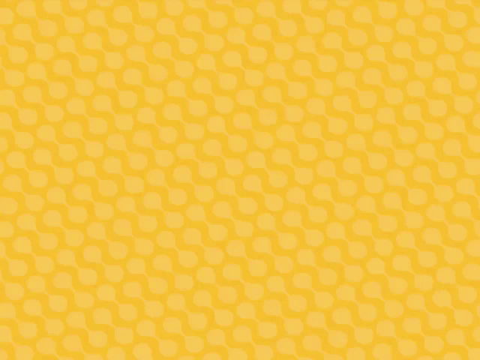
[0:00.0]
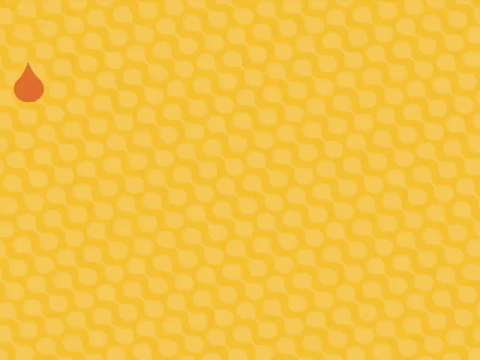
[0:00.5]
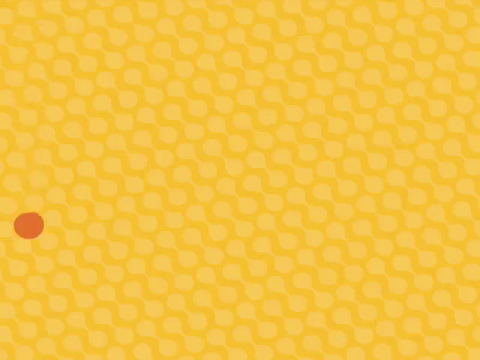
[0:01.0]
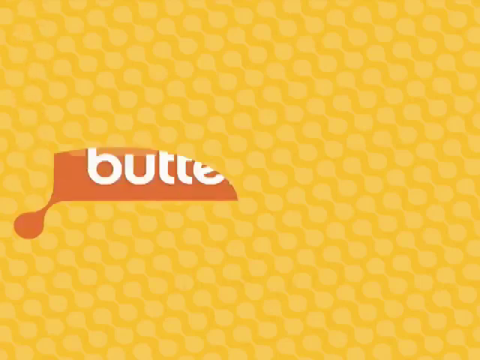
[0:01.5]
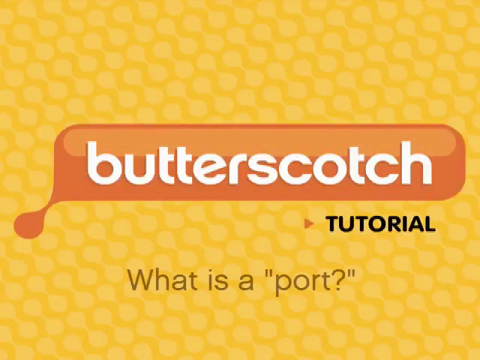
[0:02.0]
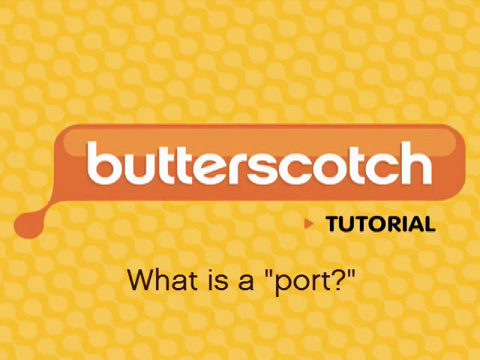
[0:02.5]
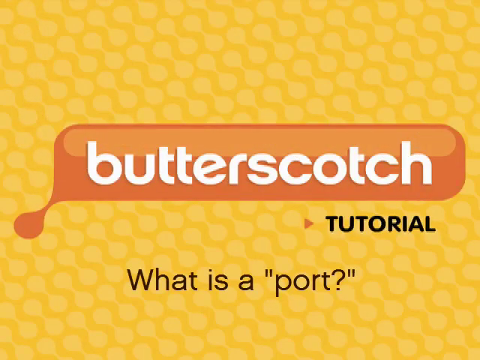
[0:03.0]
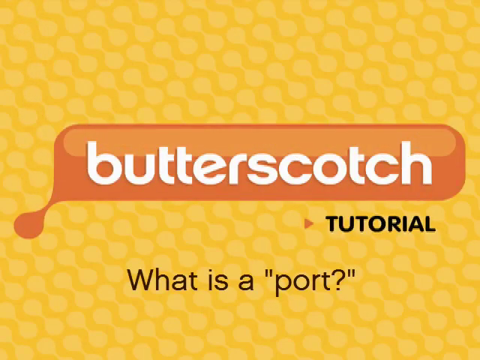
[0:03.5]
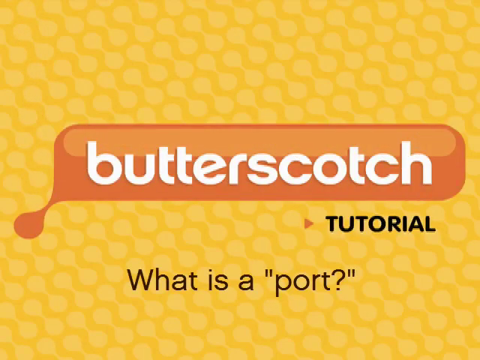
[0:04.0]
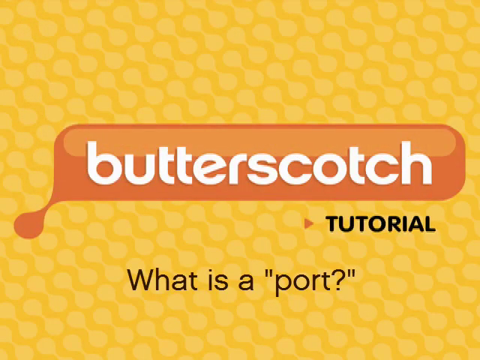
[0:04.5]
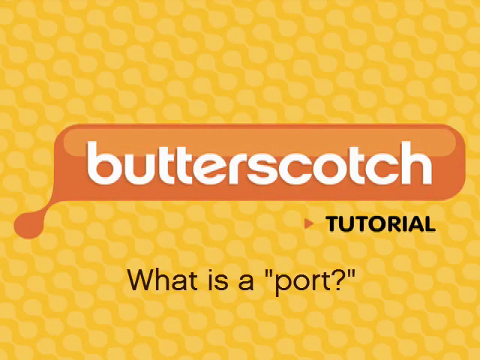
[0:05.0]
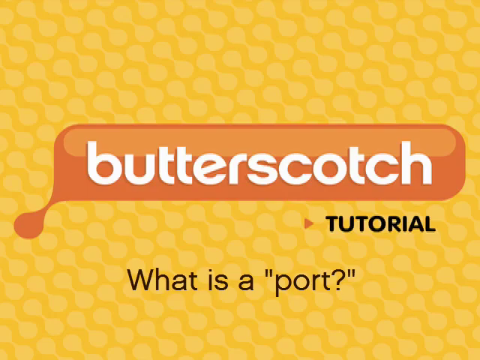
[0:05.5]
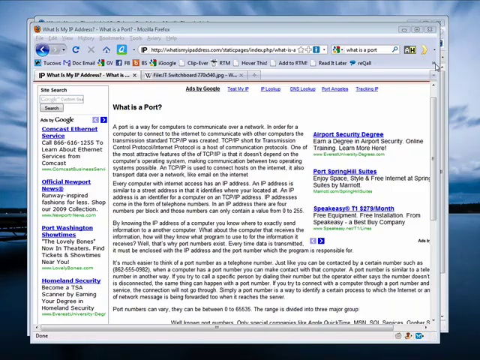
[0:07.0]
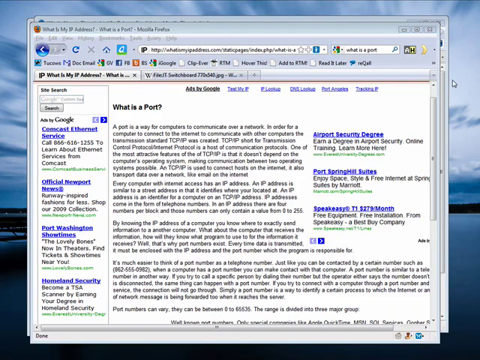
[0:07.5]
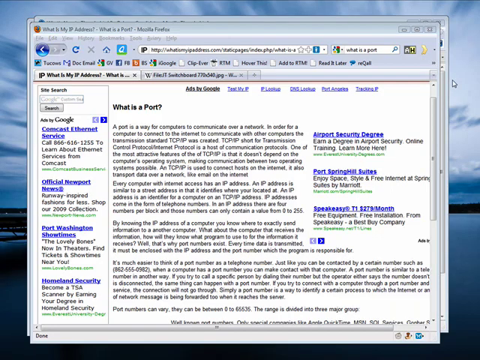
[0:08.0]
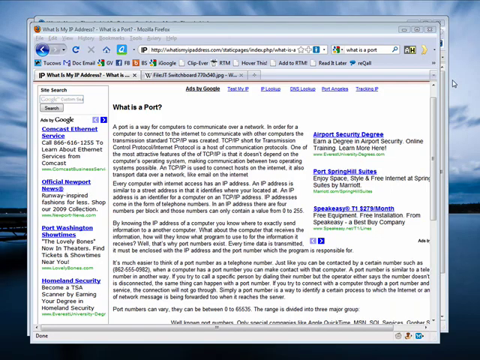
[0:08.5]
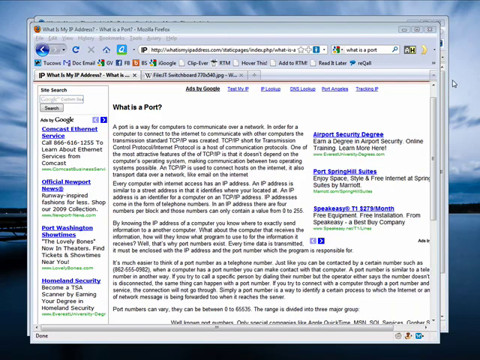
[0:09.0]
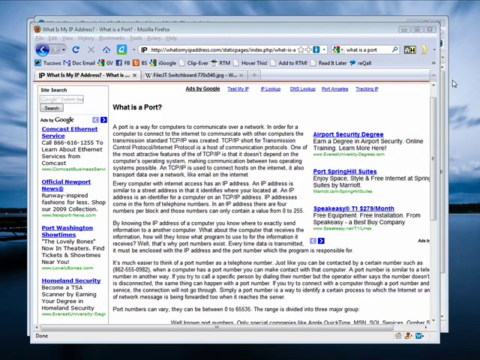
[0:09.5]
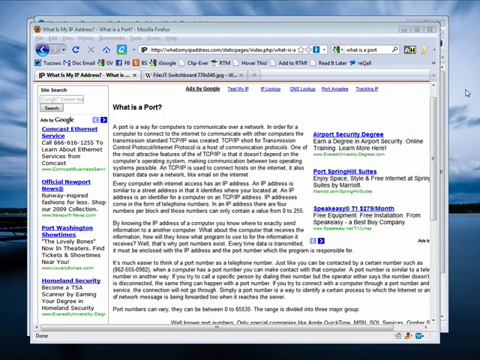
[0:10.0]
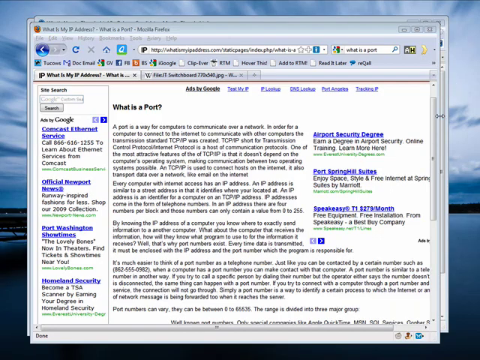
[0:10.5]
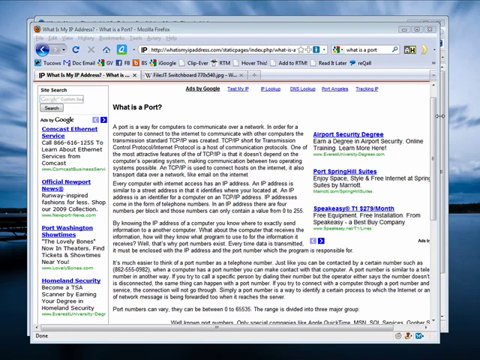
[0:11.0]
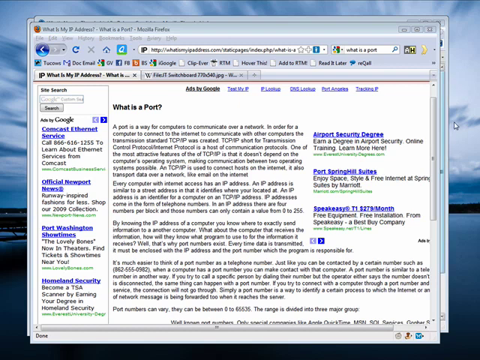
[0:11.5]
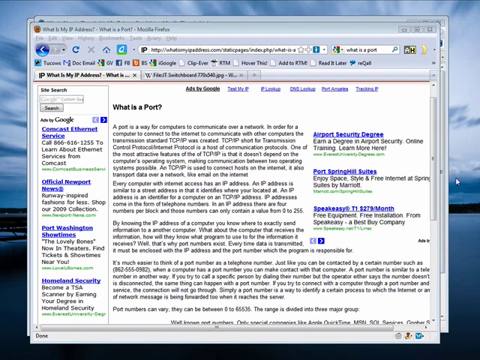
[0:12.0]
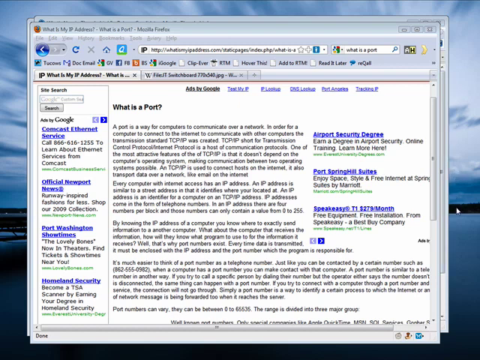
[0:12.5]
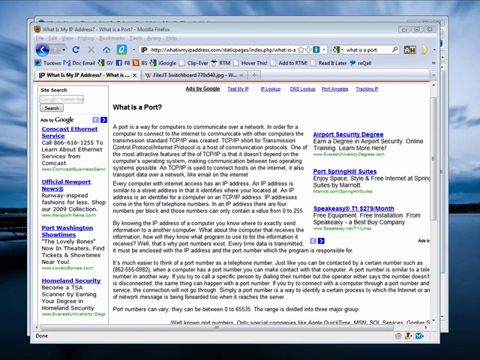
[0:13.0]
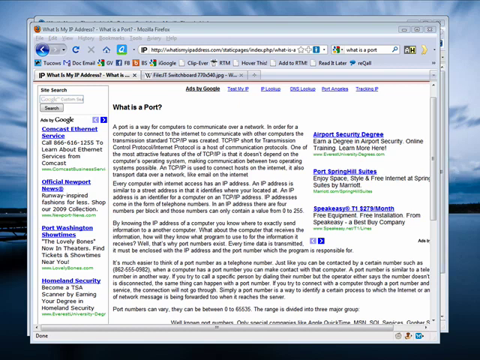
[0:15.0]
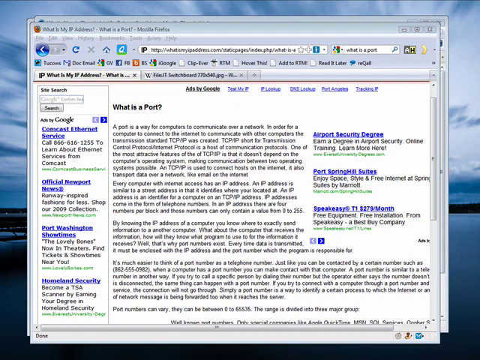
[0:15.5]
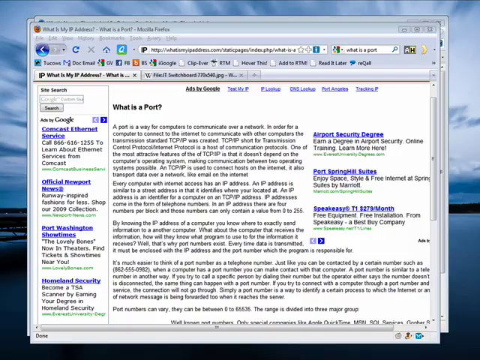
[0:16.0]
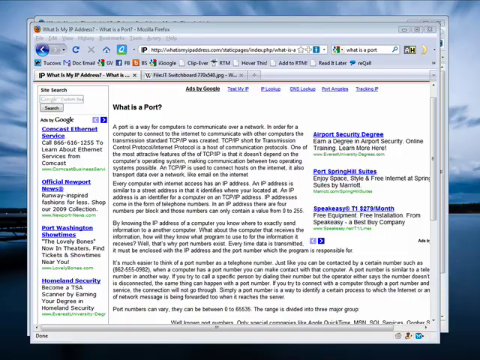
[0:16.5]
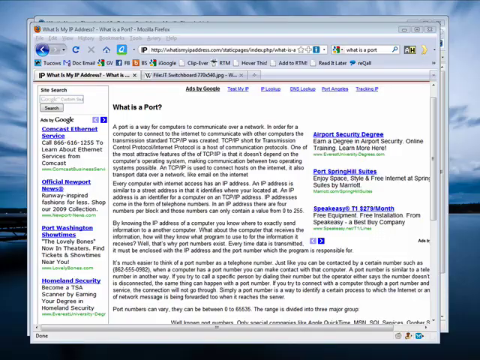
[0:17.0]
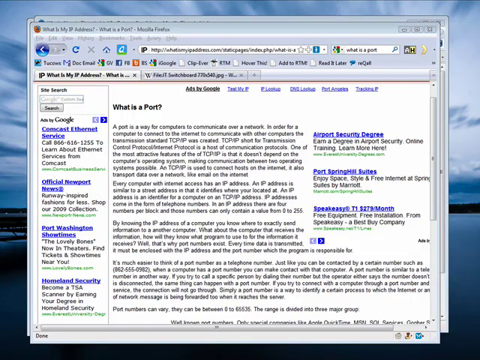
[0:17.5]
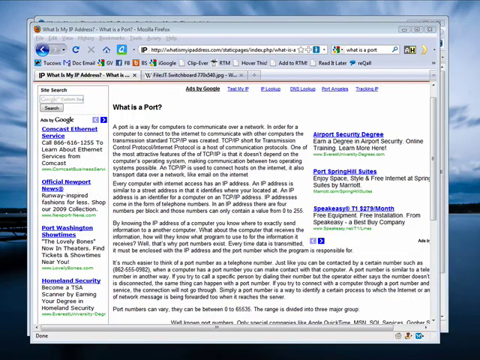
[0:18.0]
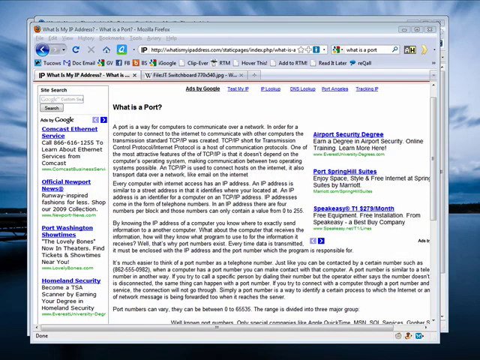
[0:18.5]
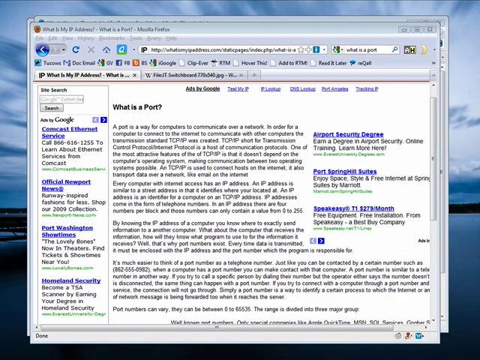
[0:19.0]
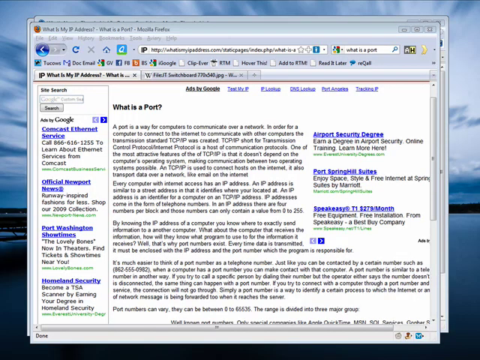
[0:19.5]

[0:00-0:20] The video begins with a yellow screen. A drop of brown appears and develops into a long rectangle with curved edges, with white text across it reading "butterscotch." Below it, to the right, is the word "tutorial," and below that, "what is a port." Next comes what looks like a screen grab from a computer desktop showing an article titled "what is the port?" The page has a series of paragraphs, about four of them. On the left side is a frame containing other articles, all with blue titles or headers. A mouse pointer moves on the right side of the screen while the page stays the same, and the camera zooms in.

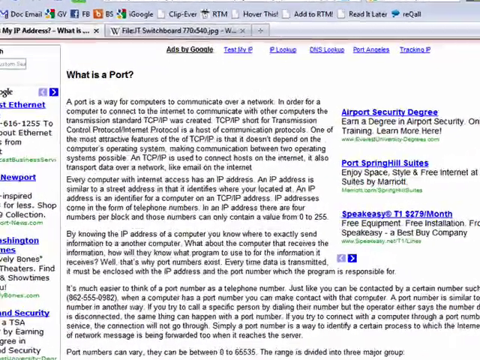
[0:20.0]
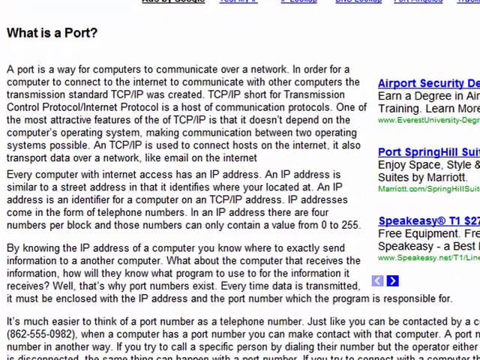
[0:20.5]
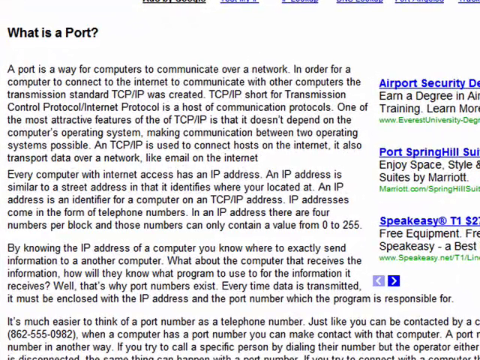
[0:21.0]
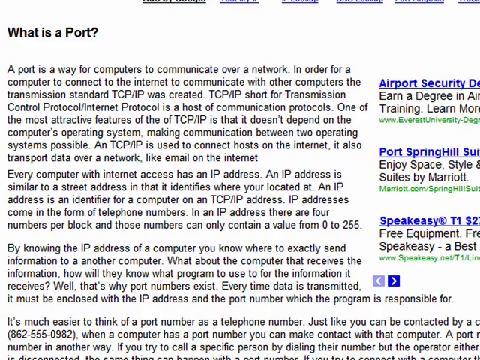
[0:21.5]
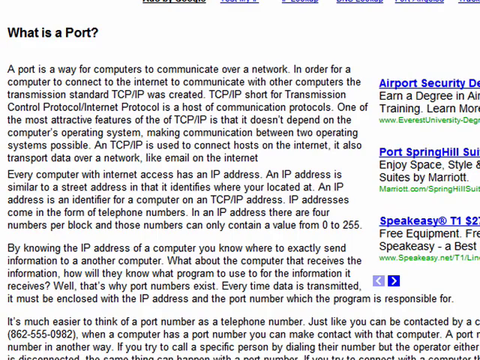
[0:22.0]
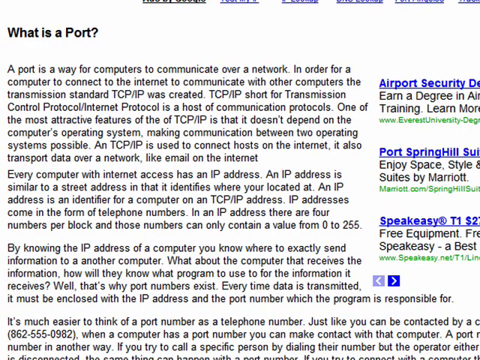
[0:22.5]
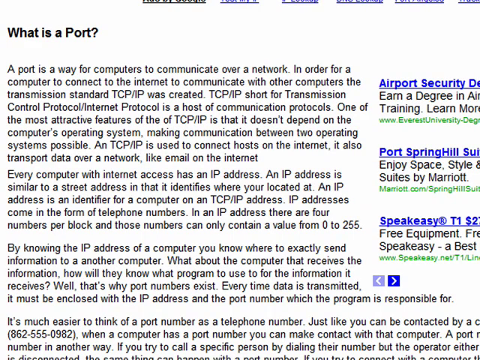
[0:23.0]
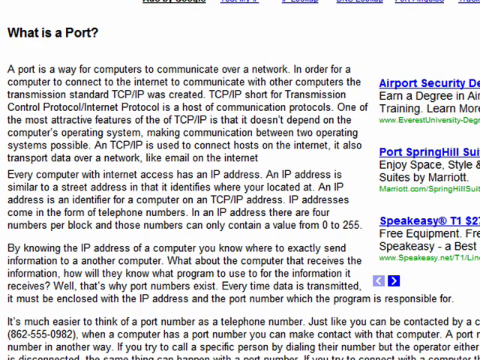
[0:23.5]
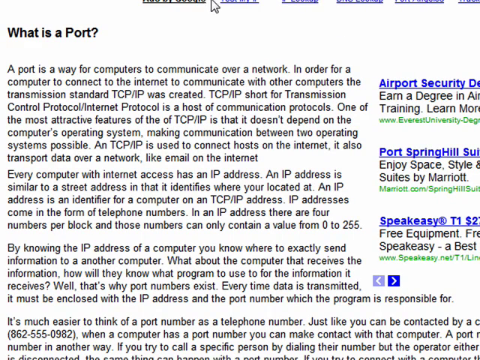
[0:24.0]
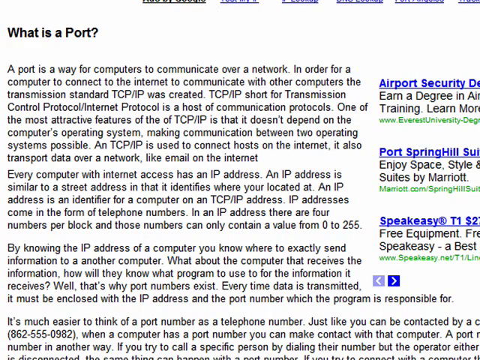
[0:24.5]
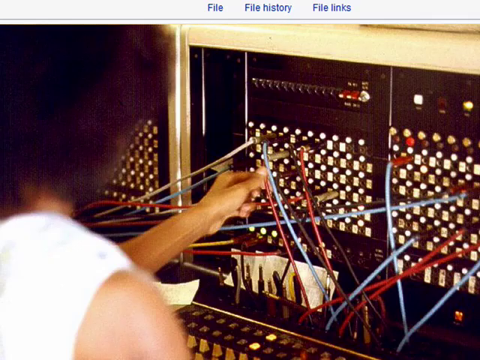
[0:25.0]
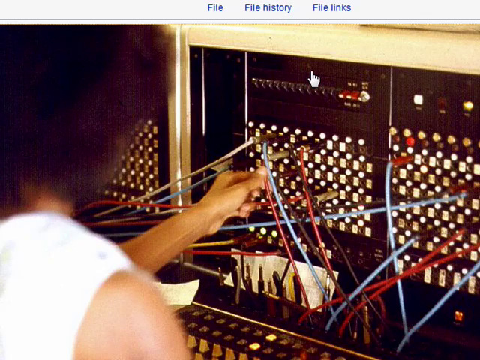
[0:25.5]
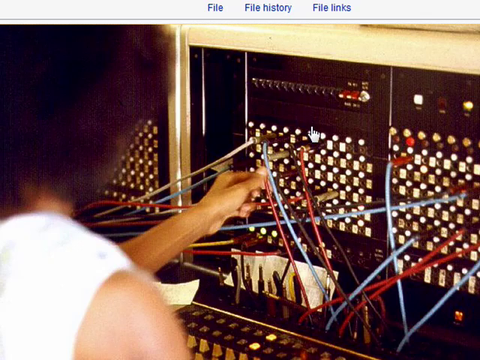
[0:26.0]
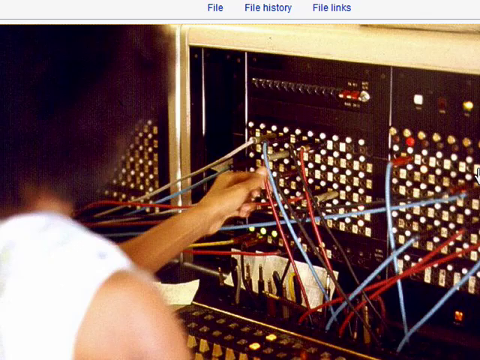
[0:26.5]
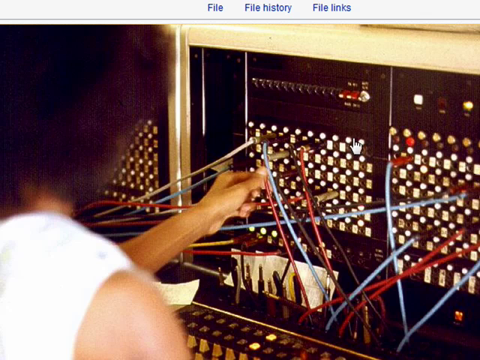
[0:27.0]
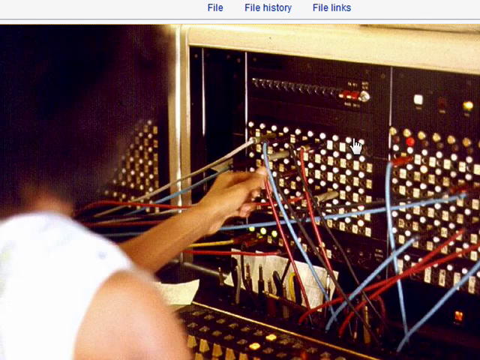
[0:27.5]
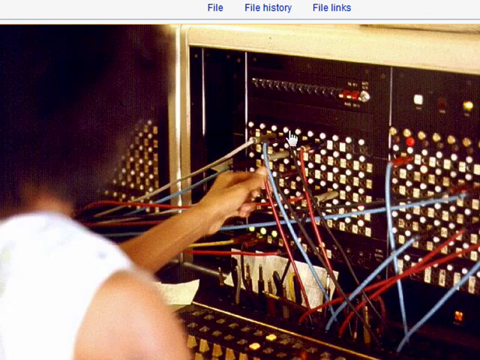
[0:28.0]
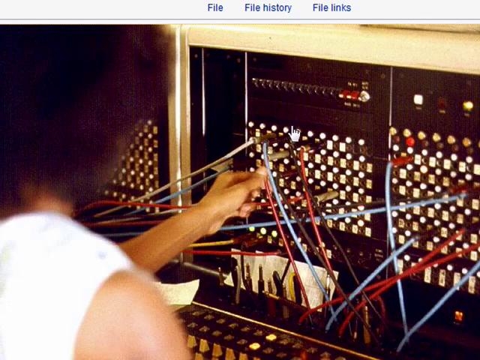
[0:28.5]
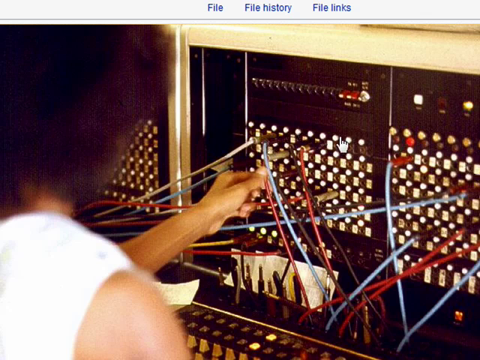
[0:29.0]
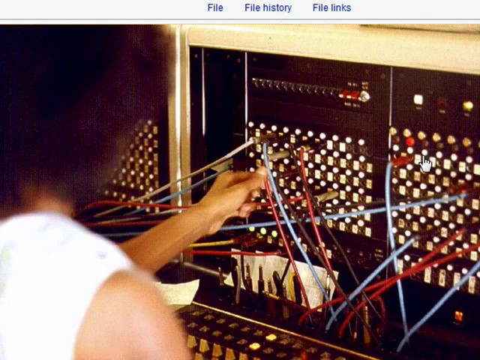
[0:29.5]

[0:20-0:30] A desktop computer screen shows a web page with a frame on the left side listing other articles with blue underlined headers. The main page shows an article with four sections, its title in black text reading "what is a port?" The camera zooms in on the article, making it readable. The first paragraph reads: "a port is a way for computers to communicate over a network. In order for a computer to connect to the internet to communicate with other computers, the transmission standard TCPIP was created. TCPIP, short for Transmission Control Protocol, Internet Protocol, is a host of communication protocols. One of the most attractive features of TCPIP is that it doesn't depend on the computer's operating system." The article continues for three more paragraphs. Next, a woman is seen from the side, operating an old-fashioned telephone operator's switchboard with lots of blue and red cables.